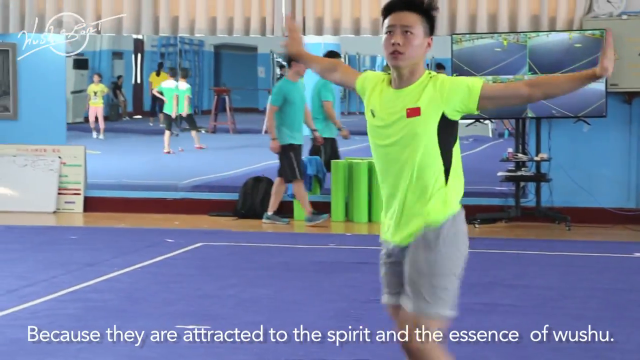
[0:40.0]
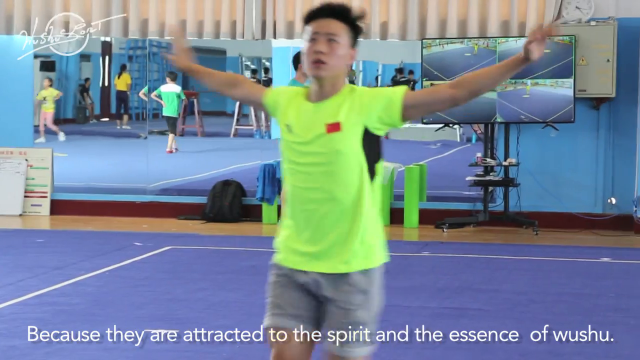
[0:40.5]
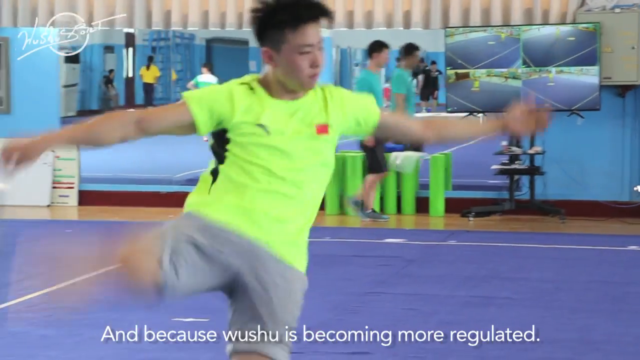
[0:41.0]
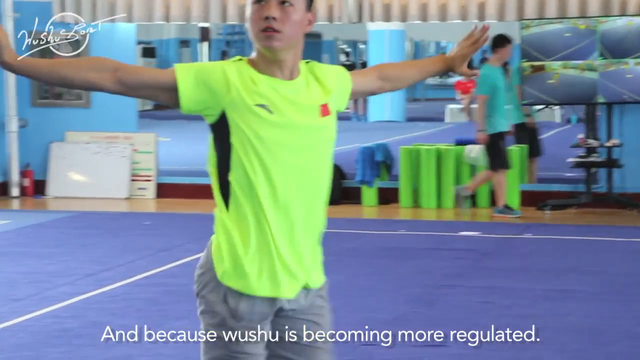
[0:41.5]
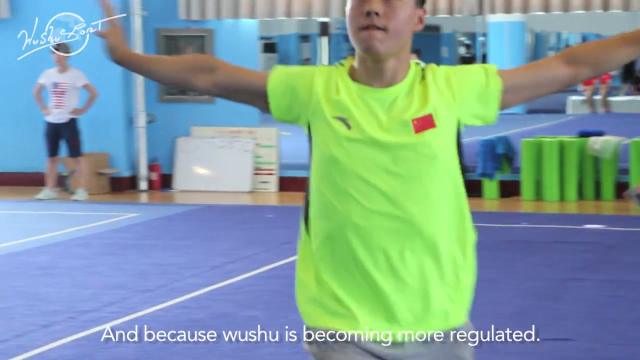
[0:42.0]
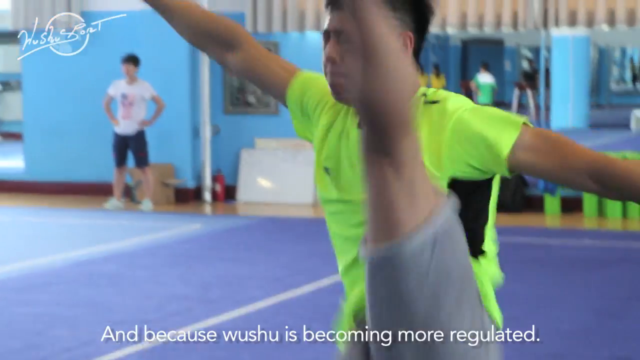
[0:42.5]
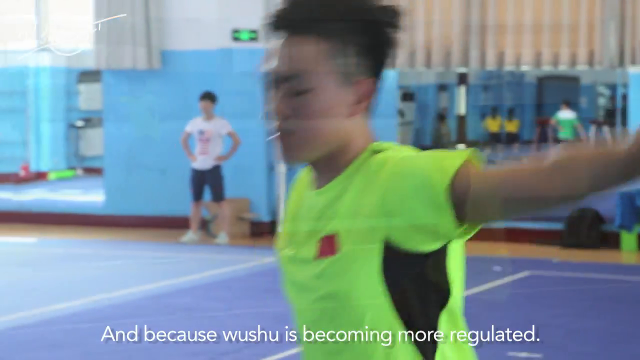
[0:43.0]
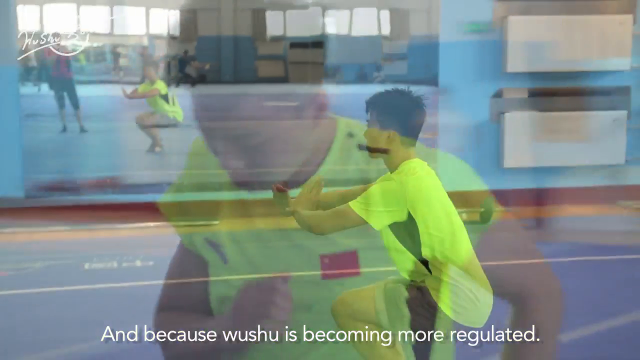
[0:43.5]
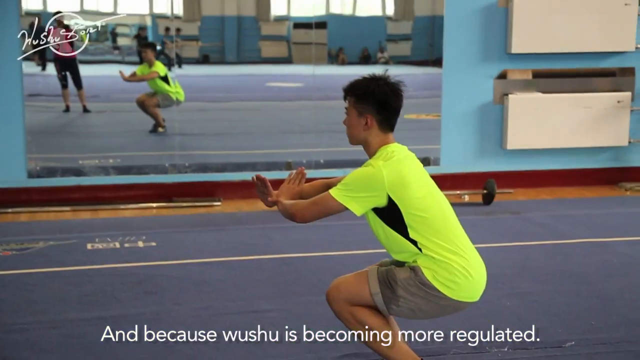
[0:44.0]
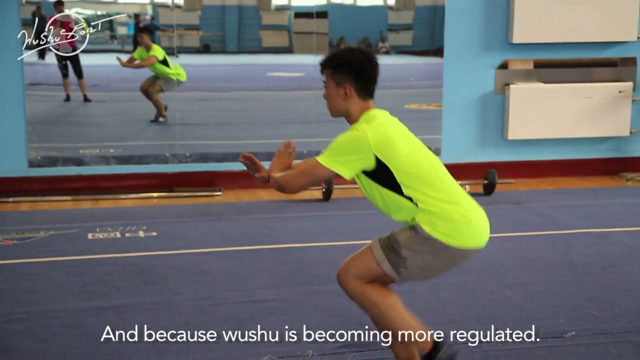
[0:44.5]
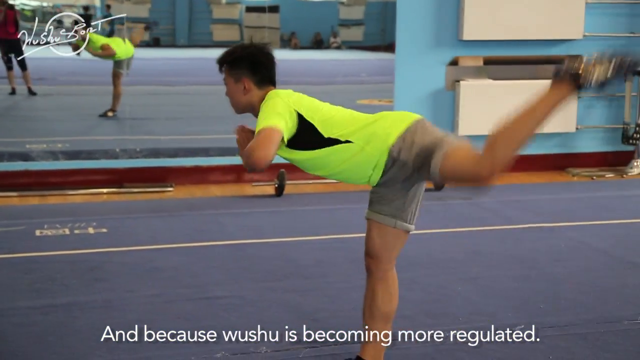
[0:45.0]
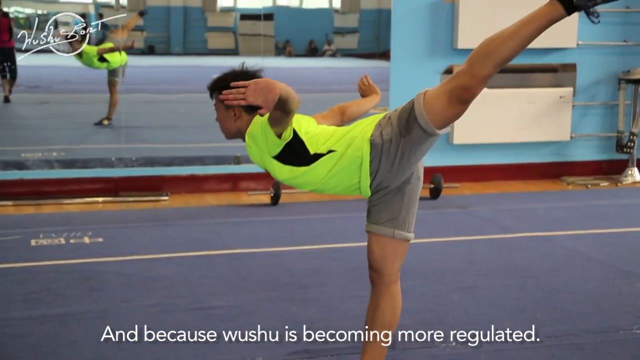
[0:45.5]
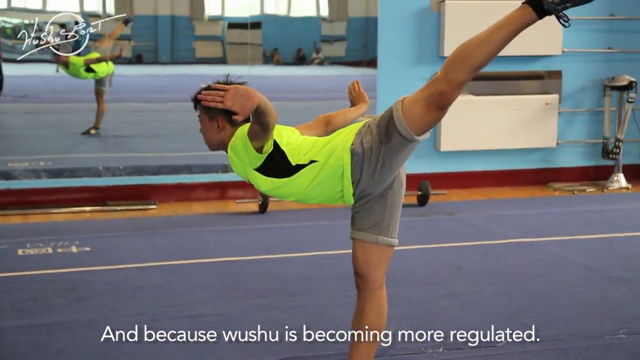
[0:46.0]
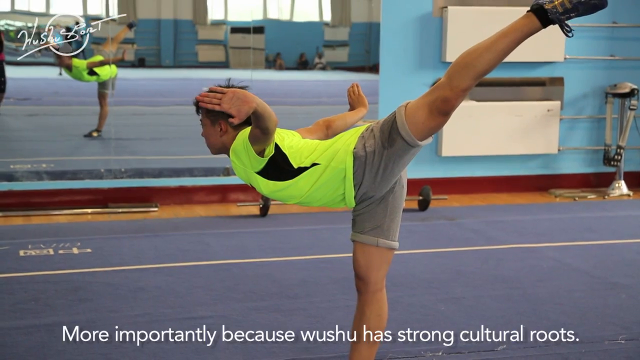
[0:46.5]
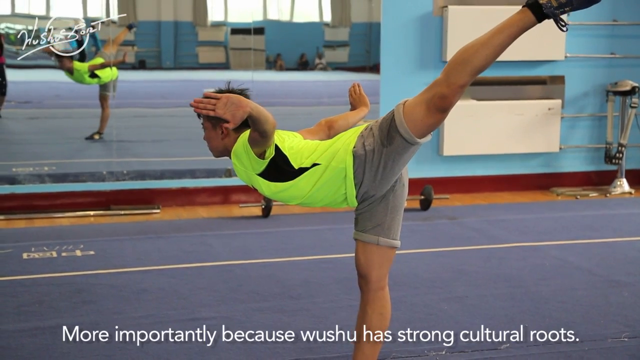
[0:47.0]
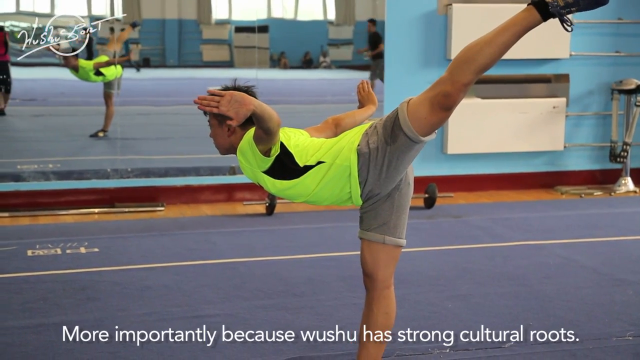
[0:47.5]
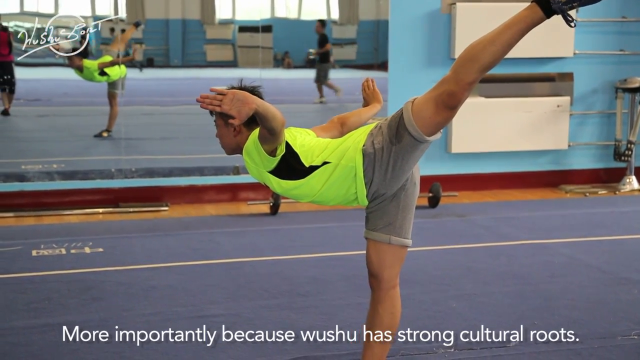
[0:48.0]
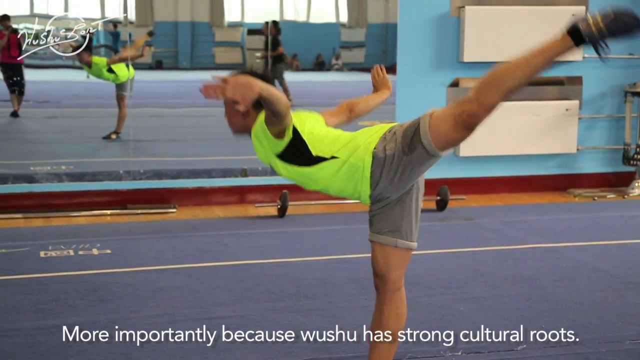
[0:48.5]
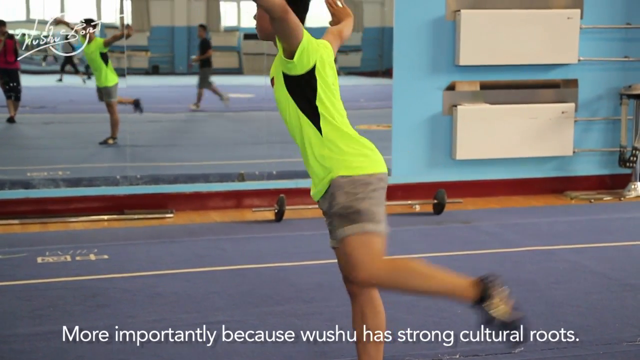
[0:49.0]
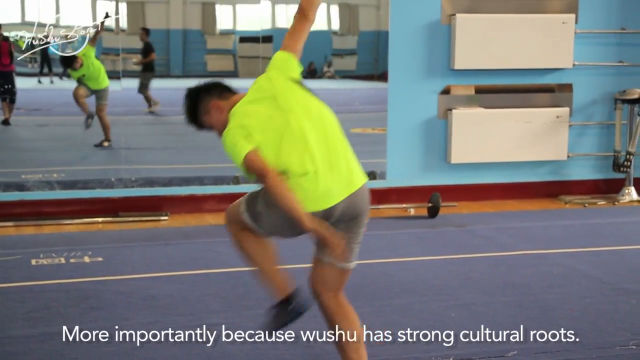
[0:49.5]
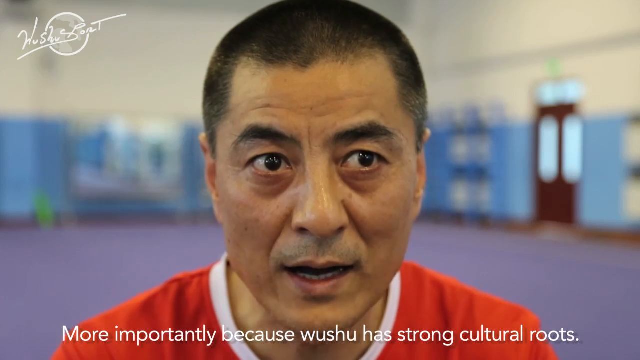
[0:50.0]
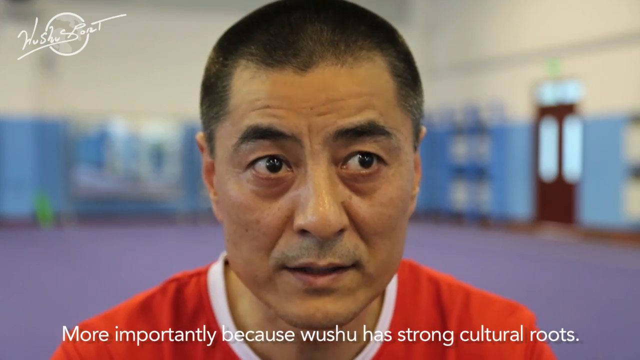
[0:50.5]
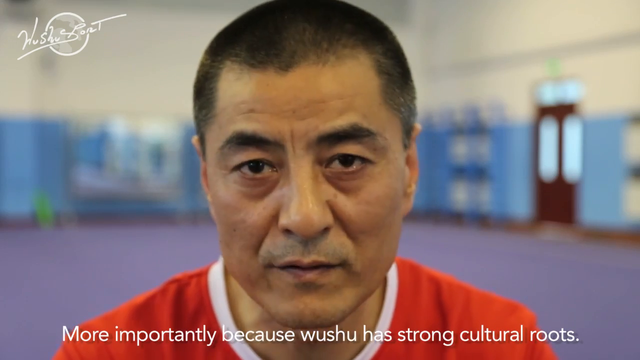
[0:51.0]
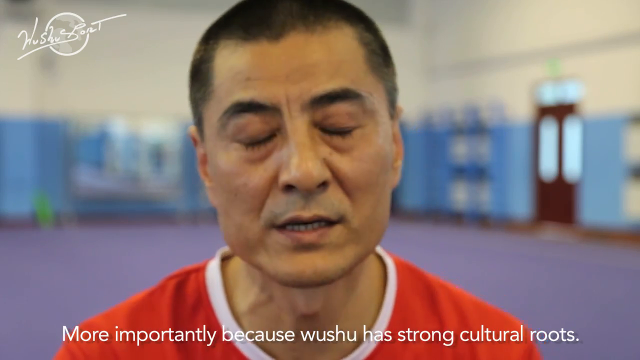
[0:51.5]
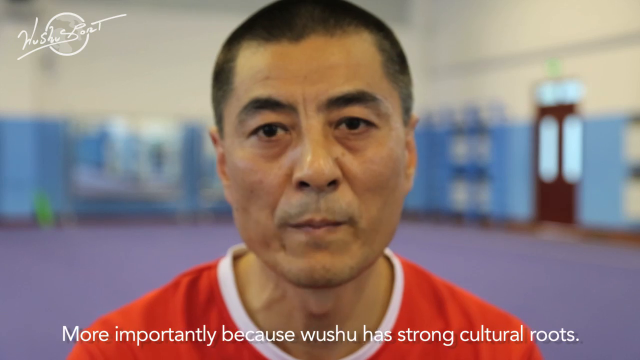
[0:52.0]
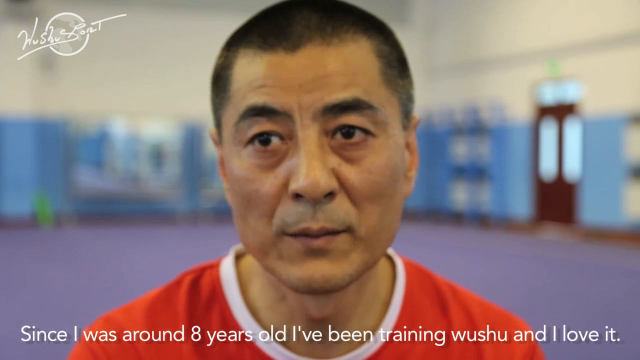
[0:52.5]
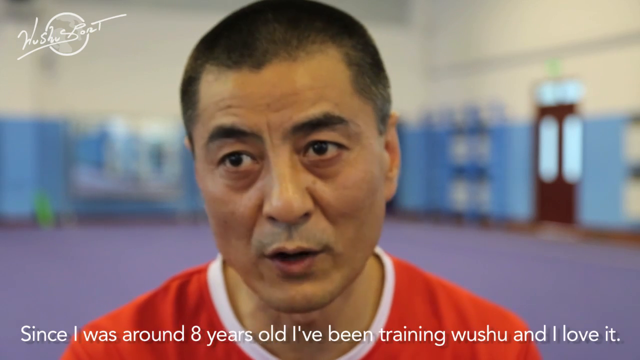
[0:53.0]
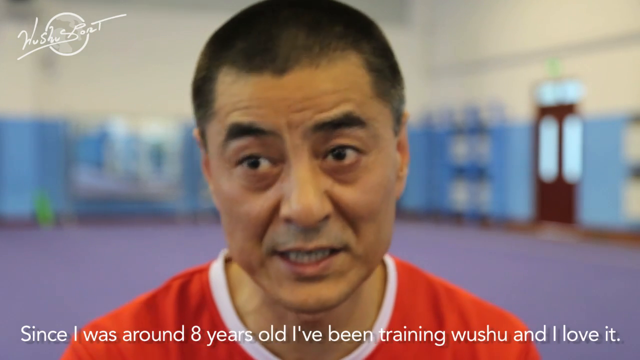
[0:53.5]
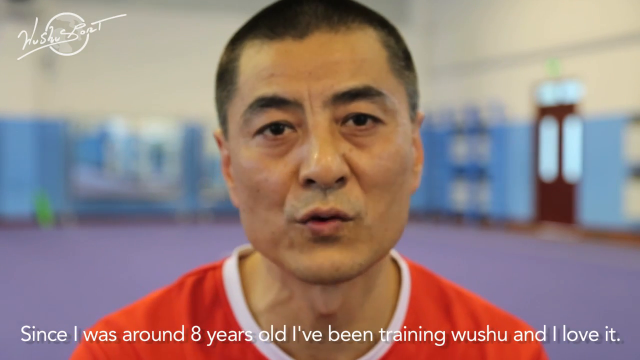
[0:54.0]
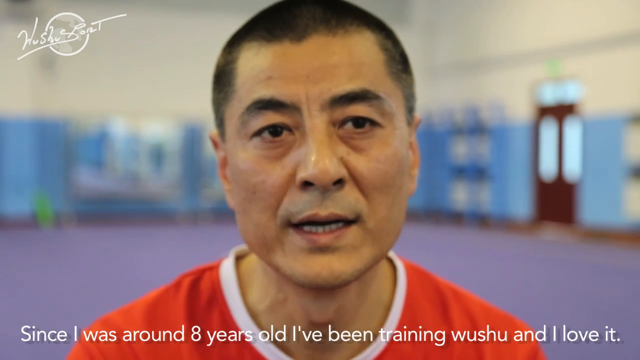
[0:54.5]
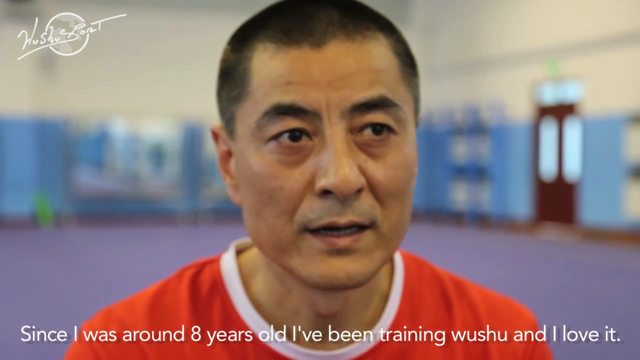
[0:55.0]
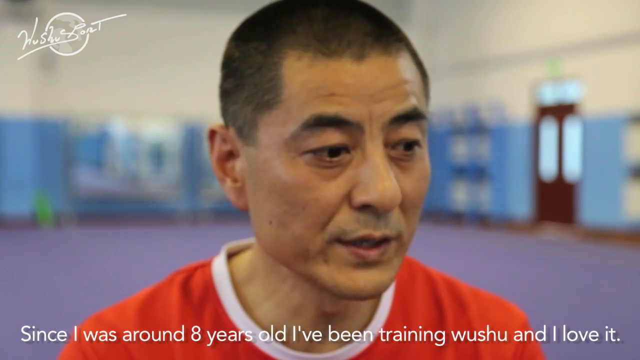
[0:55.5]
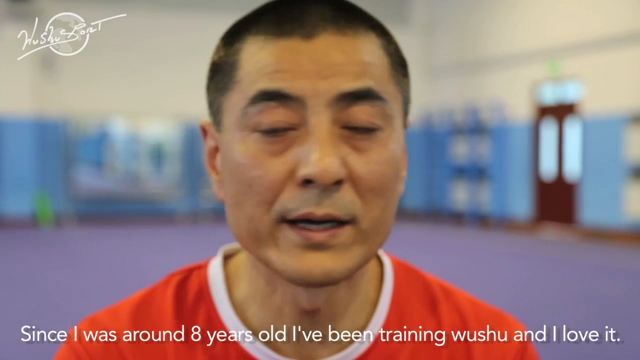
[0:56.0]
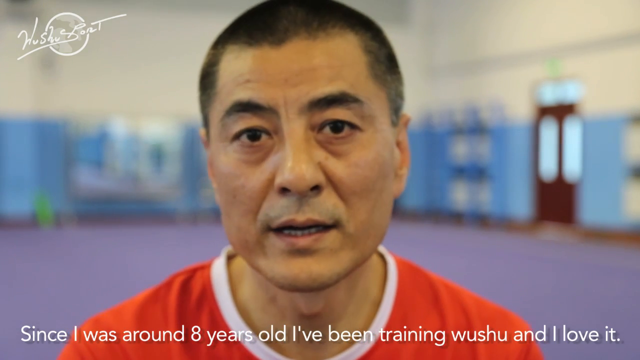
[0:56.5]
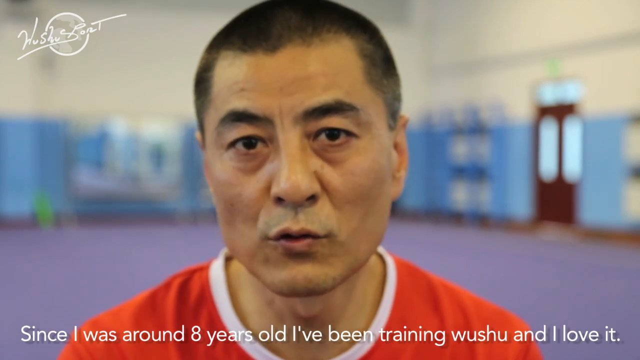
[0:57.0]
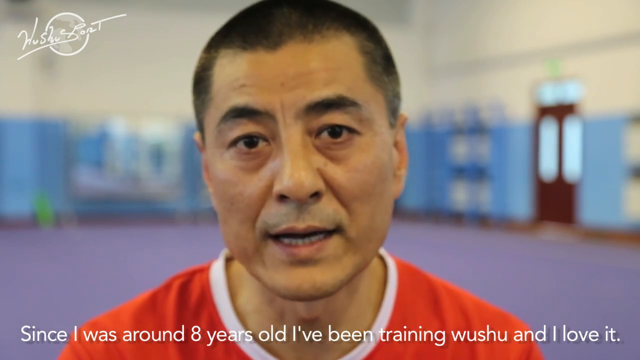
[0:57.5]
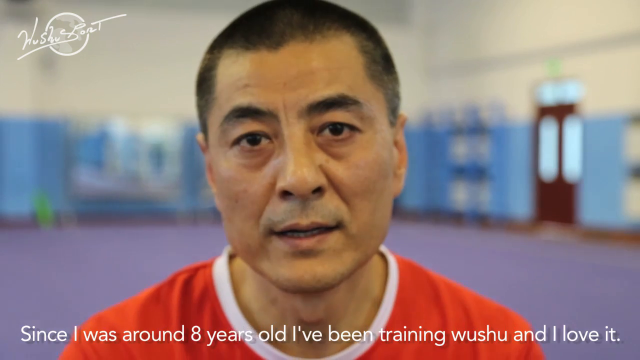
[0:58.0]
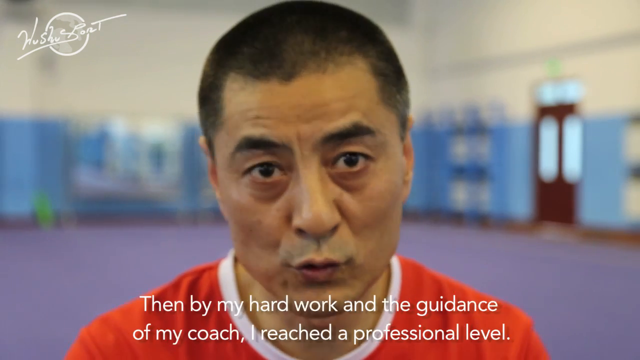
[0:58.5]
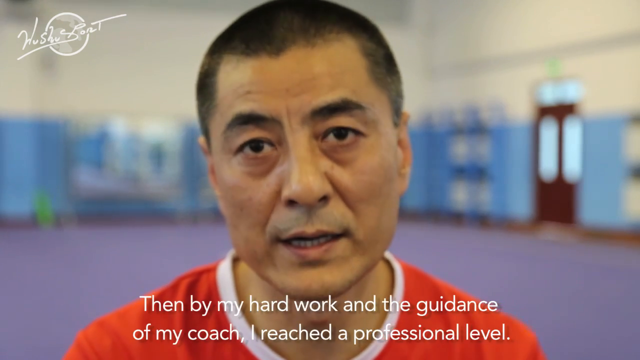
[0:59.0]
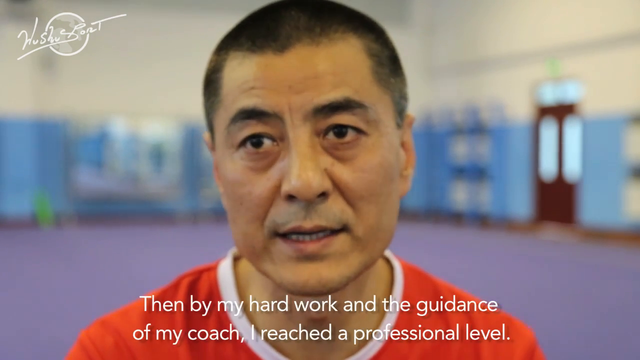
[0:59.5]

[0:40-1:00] Part of a very large room has a purple mat on the floor and very large mirrors on the walls. A person in a fluorescent yellow shirt and gray shorts stands on the mat, kicking his legs up, taking a few steps and kicking them up again with his arms out from his sides, doing wushu. Another view shows him squatting with his arms crossed, then kicking a leg backwards and spreading his arms out to the sides while standing in front of a mirror watching himself. The video then cuts to a Chinese man with black hair, wearing a red shirt with a white stripe along the top of the collar, sitting and speaking directly into the camera, with his words captioned at the bottom of the screen: "It's just more importantly because Wushu has strong cultural roots since I was around 8 years old. I've been training Wushu and I love it."